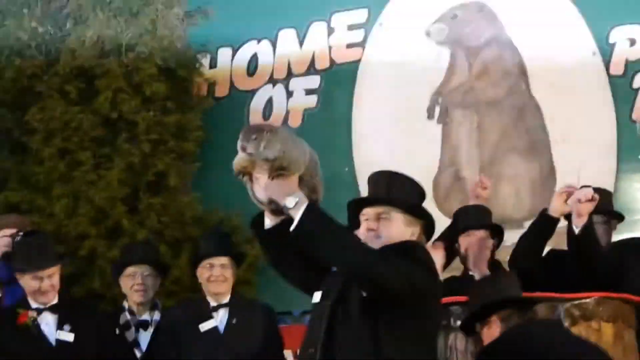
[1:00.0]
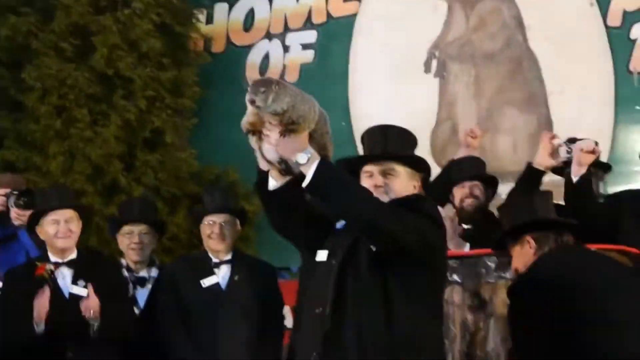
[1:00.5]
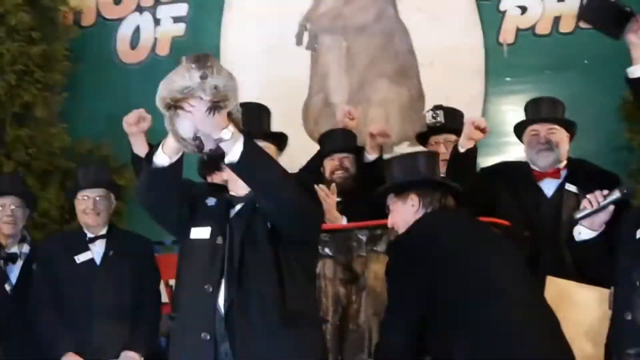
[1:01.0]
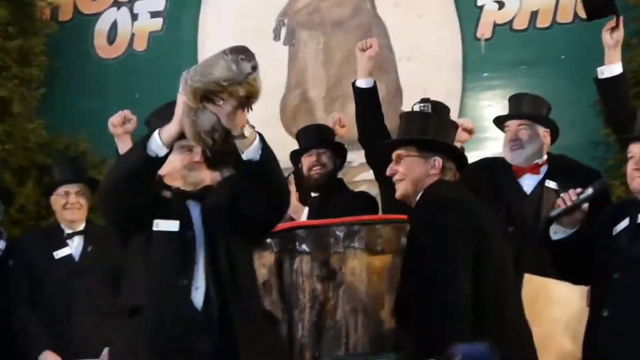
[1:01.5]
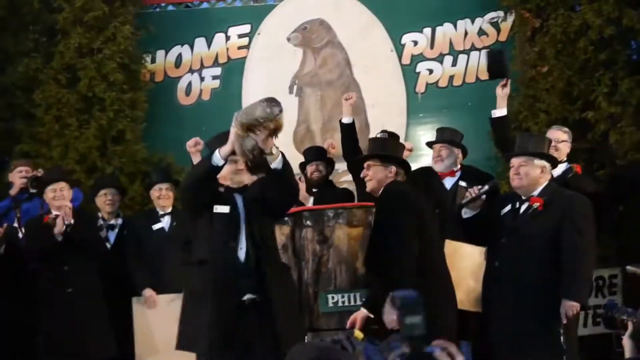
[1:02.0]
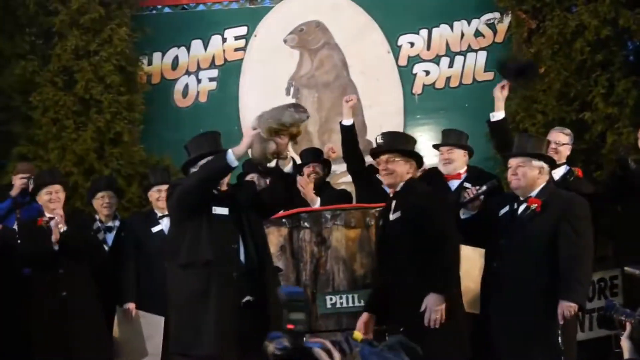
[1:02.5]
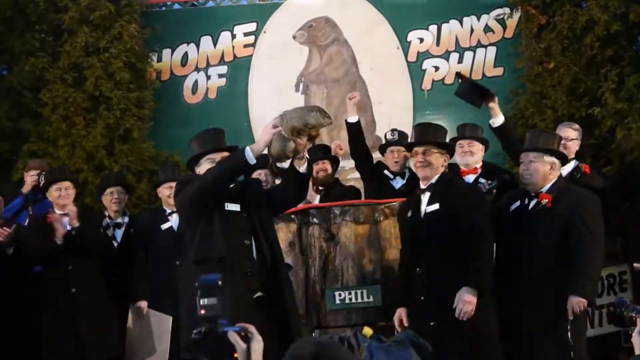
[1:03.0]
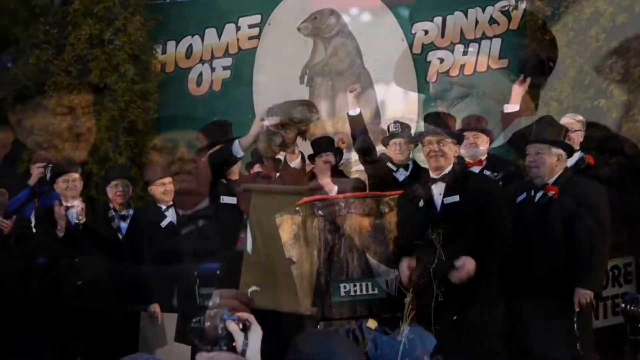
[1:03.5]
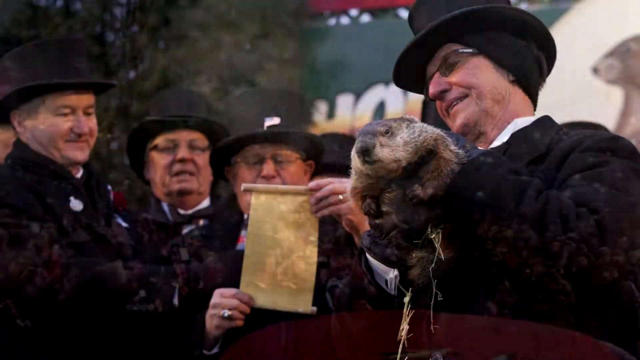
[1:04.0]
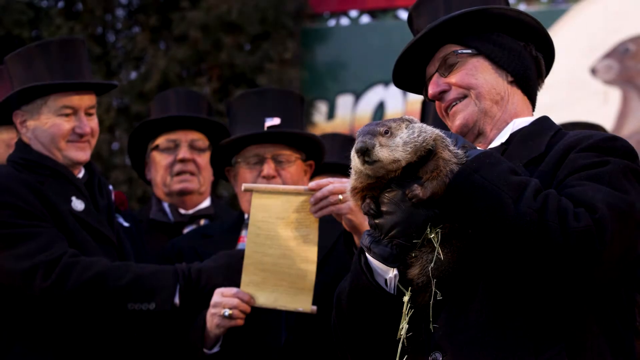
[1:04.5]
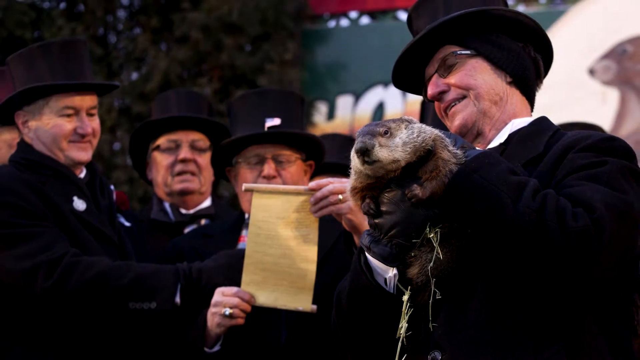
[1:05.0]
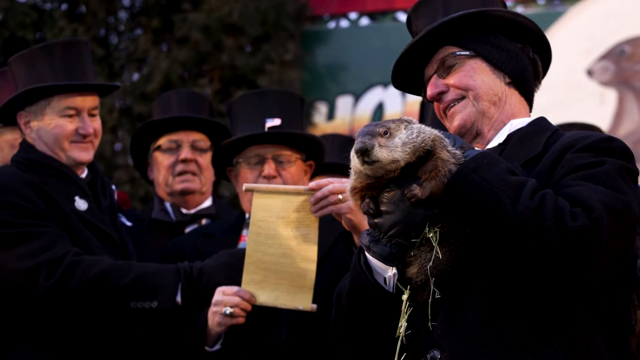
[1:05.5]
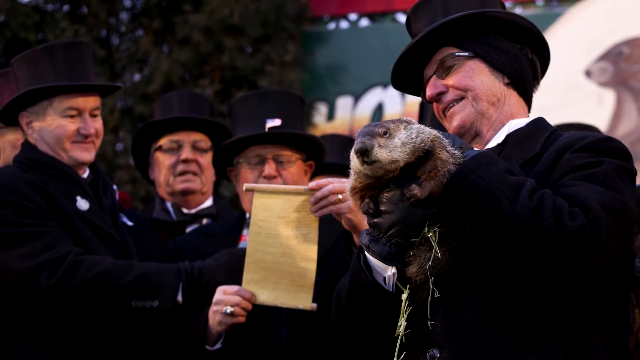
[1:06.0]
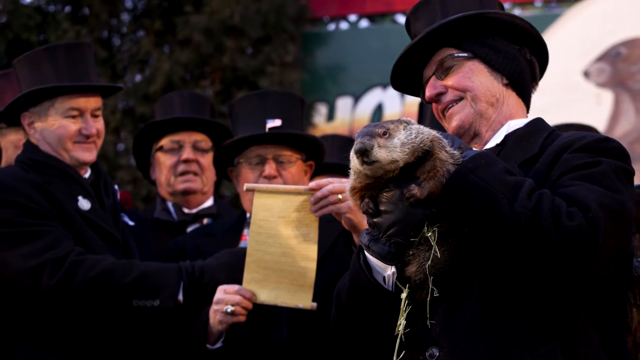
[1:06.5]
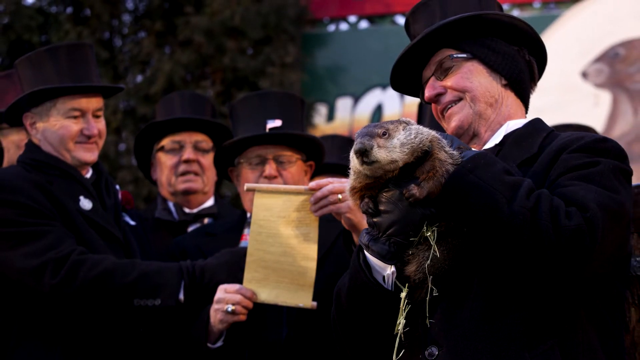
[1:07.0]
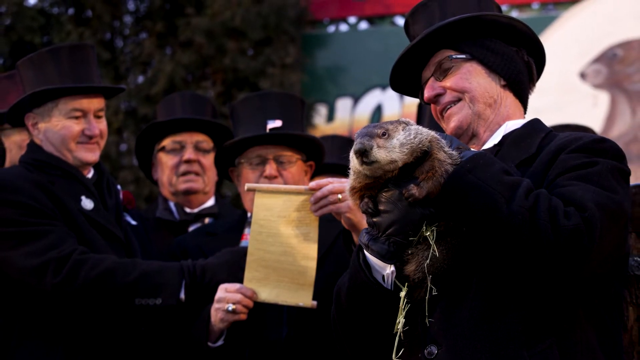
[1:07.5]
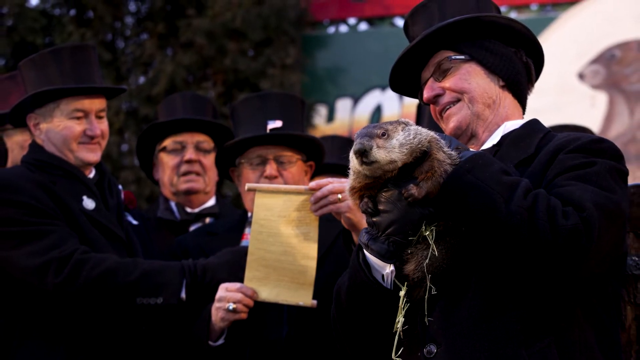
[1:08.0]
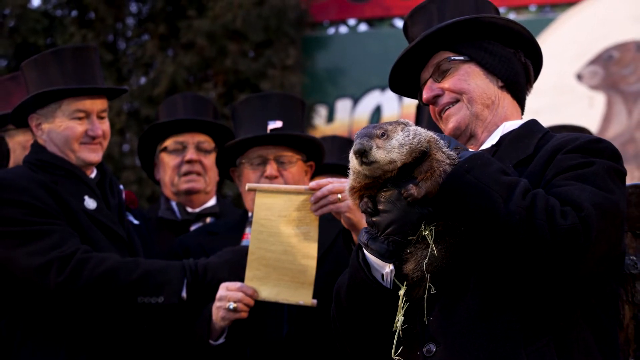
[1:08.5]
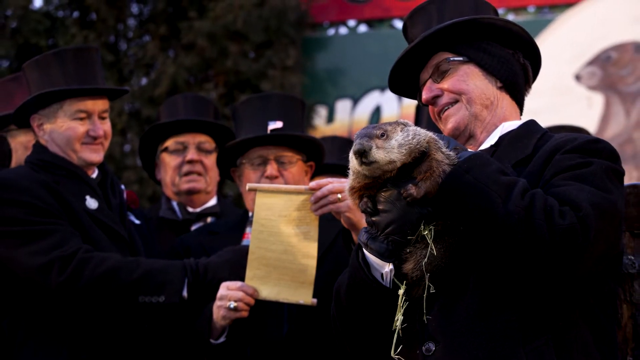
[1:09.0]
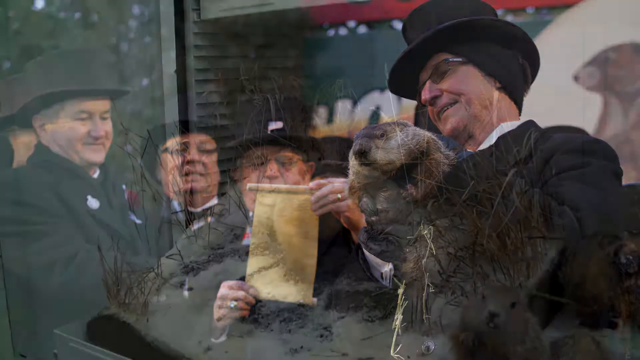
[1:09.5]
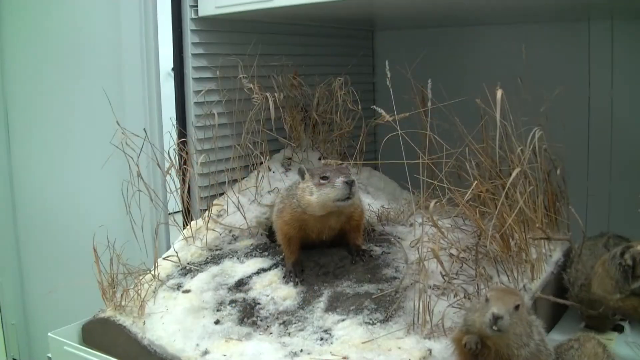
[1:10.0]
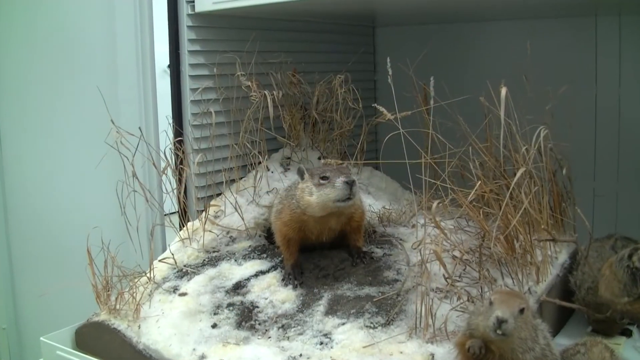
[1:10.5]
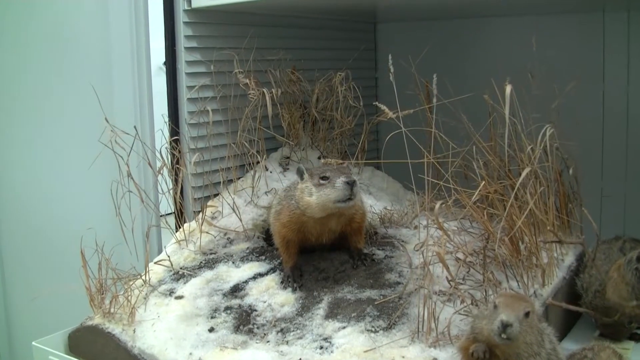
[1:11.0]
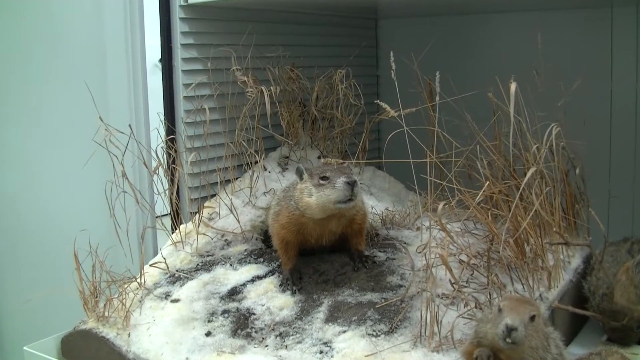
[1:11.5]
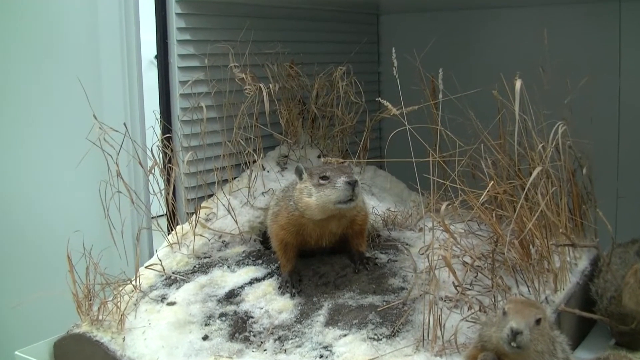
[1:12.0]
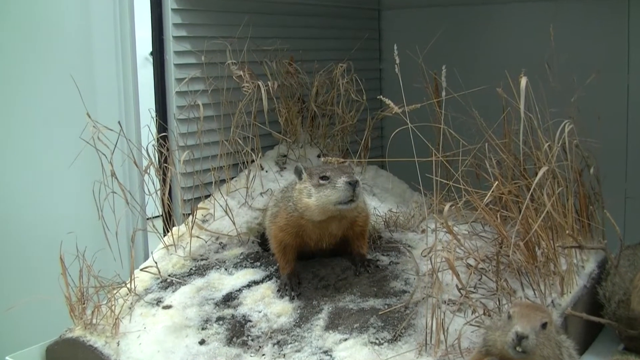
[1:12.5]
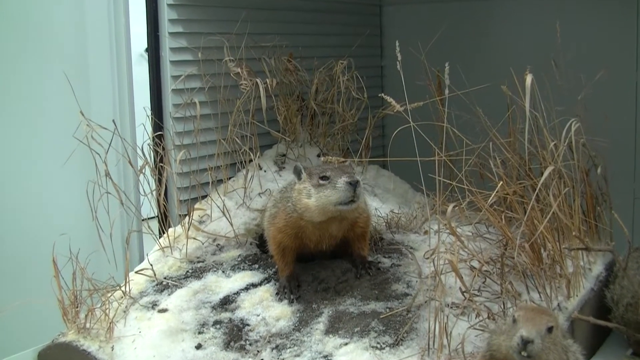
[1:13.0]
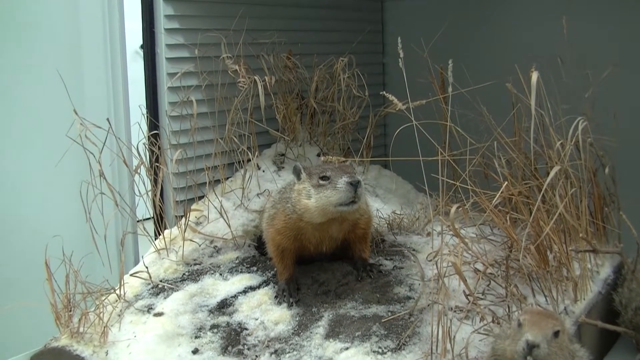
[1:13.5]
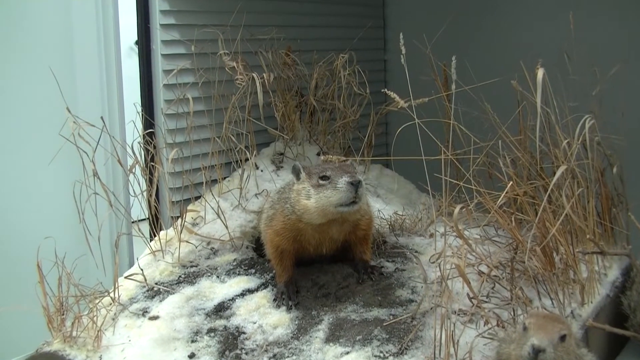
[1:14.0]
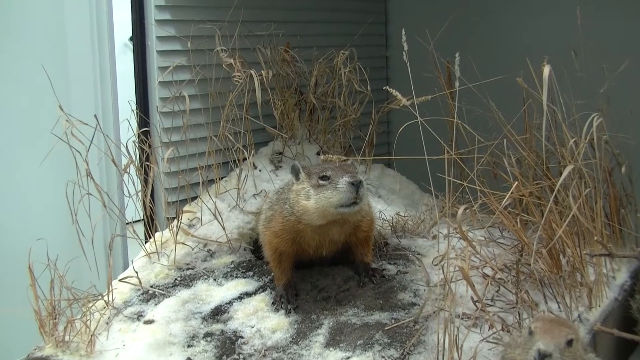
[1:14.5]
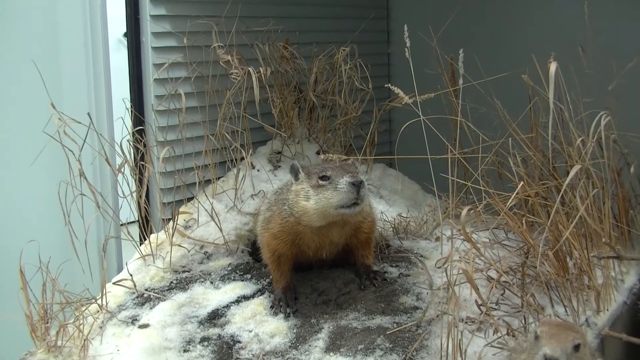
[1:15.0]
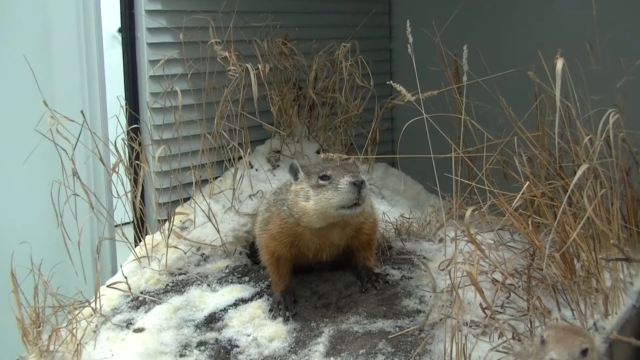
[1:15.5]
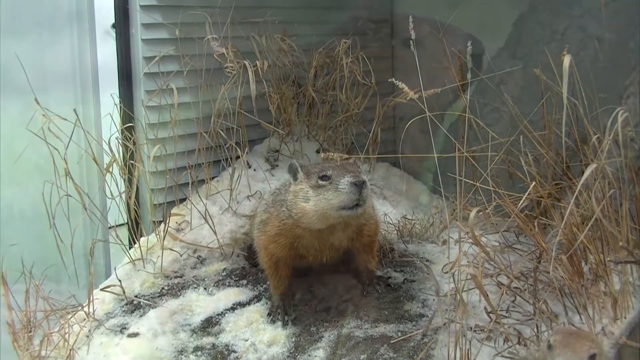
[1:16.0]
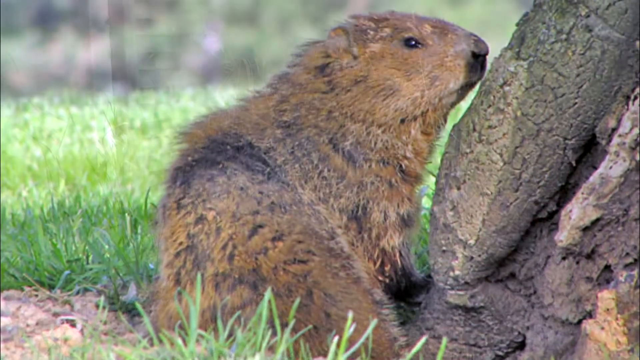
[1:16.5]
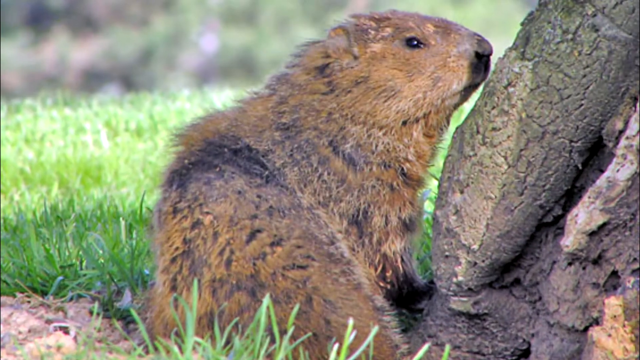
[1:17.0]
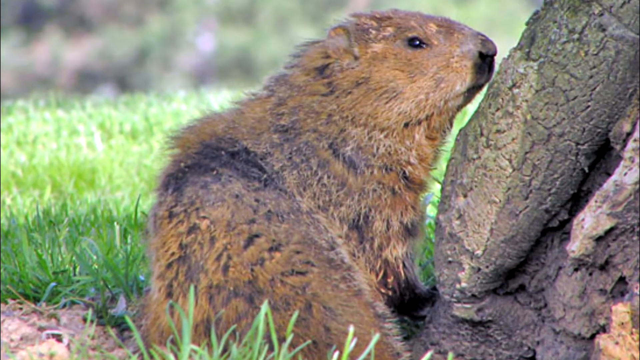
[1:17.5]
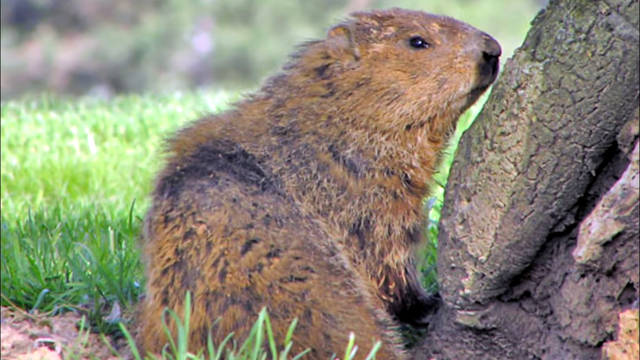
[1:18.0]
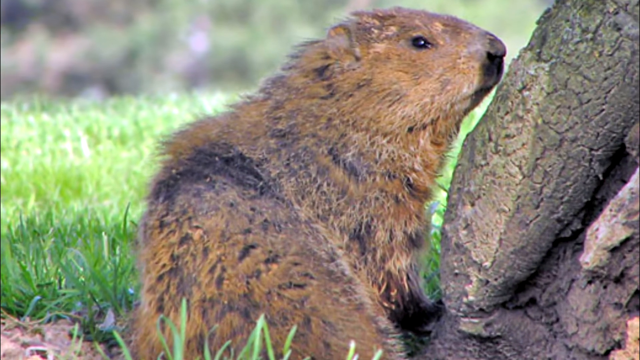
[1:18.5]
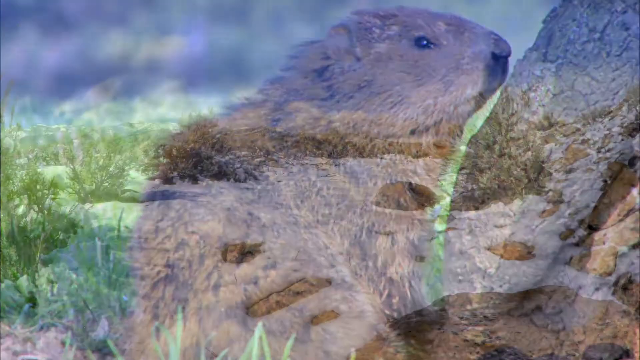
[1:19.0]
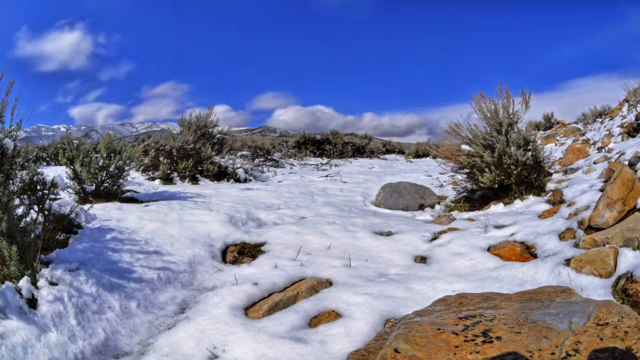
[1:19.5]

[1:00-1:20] Phil's handler holds him high, with about six or seven men in top hats standing behind. Phil's left front paw reaches out as the handler holds him with the left hand in front and the right hand behind. People take off their top hats, raising their hands to do so, or hold them back on their heads, and many people clap and cheer; there are probably a dozen people on stage plus the crowd. Phil is held in the right hand of his handler, an older man wearing slightly tinted glasses. Behind them are three visible men in top hats, one of whom holds a yellow scroll and reads its contents to the crowd. The camera slowly backs away, and the view returns to the groundhog coming out of its hole. A side view then shows one in the wild in the snow, its right side facing the camera.